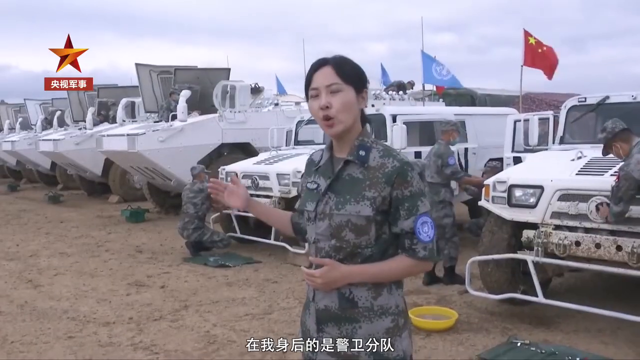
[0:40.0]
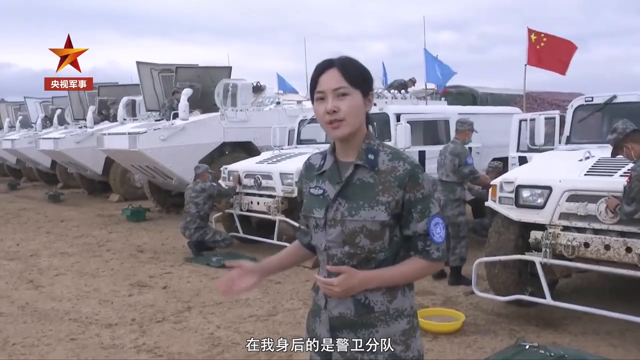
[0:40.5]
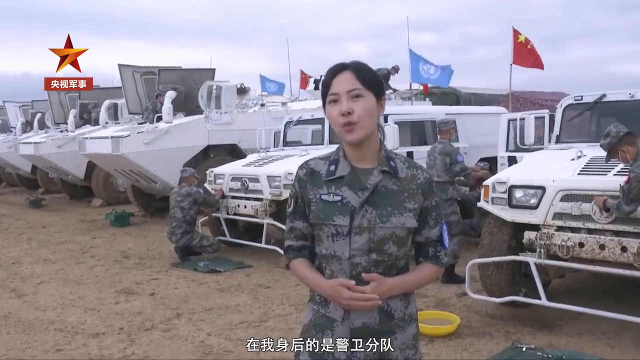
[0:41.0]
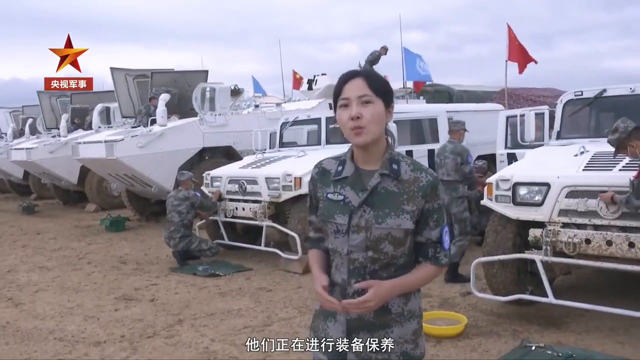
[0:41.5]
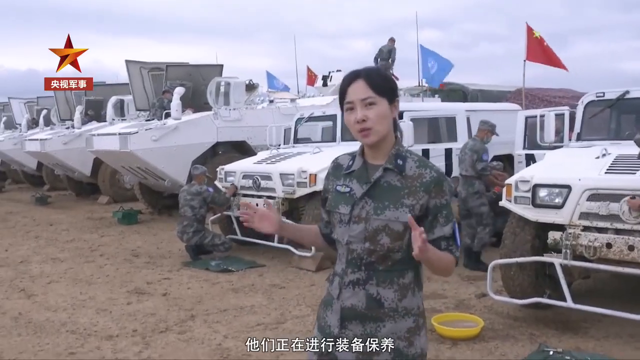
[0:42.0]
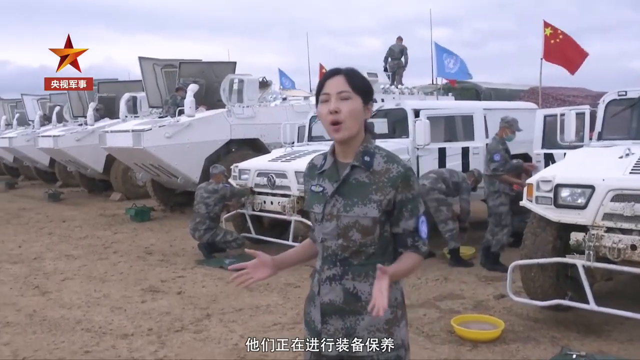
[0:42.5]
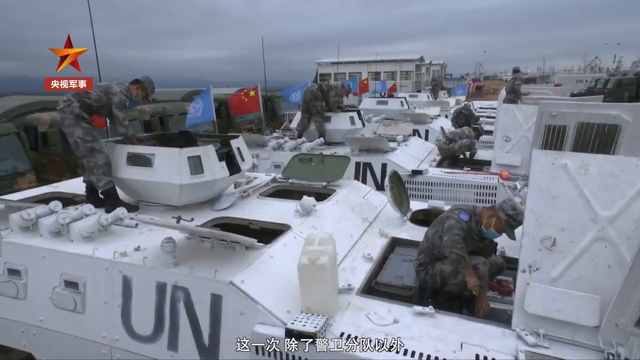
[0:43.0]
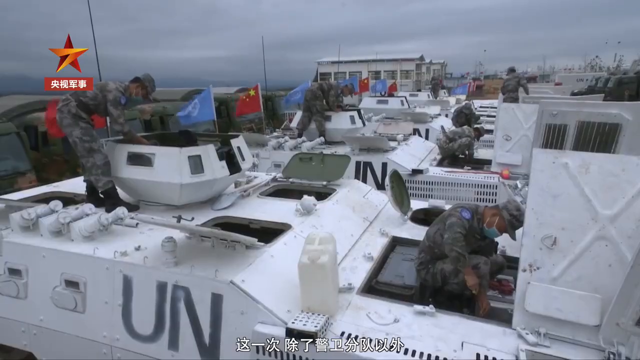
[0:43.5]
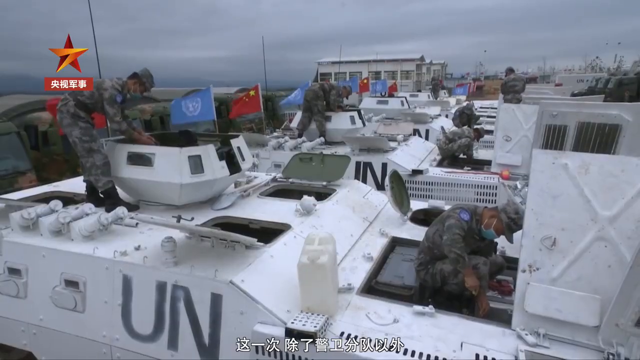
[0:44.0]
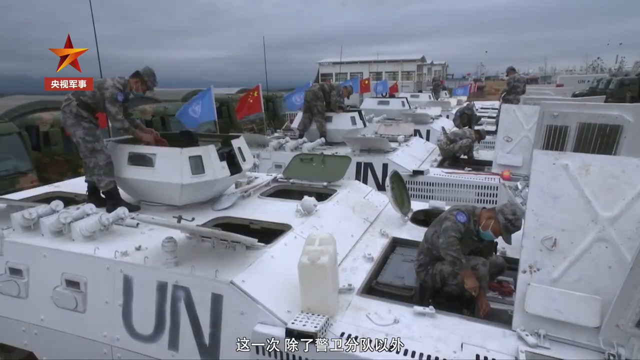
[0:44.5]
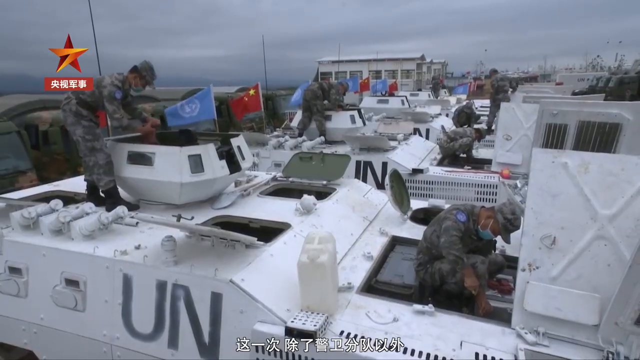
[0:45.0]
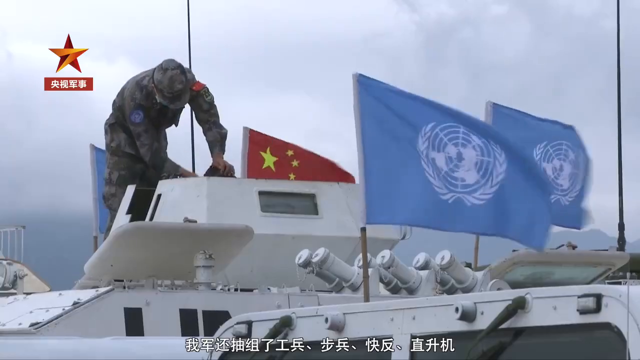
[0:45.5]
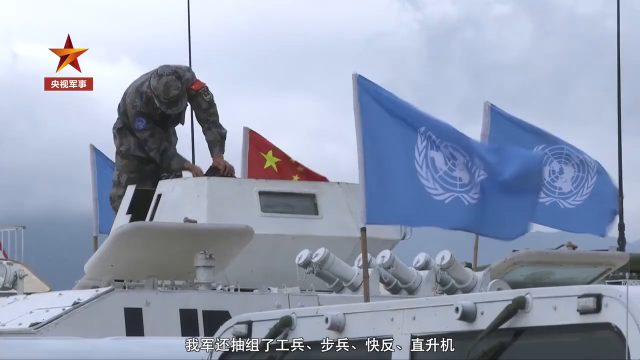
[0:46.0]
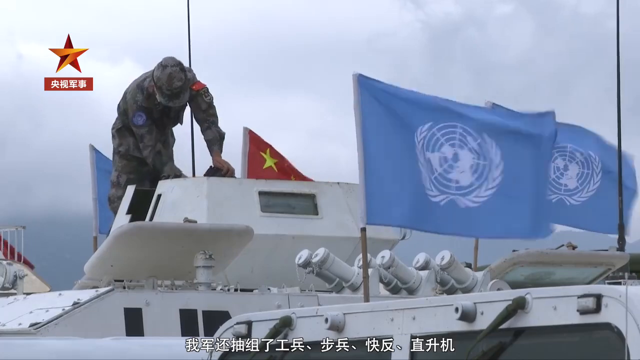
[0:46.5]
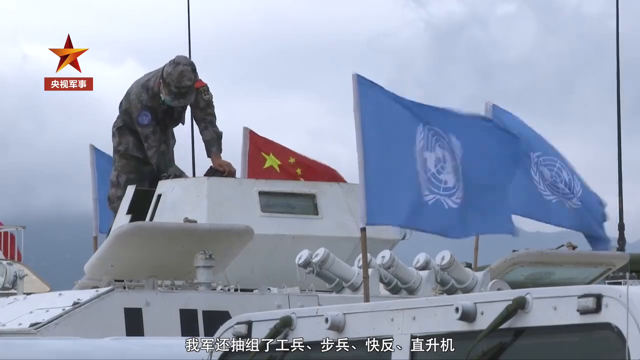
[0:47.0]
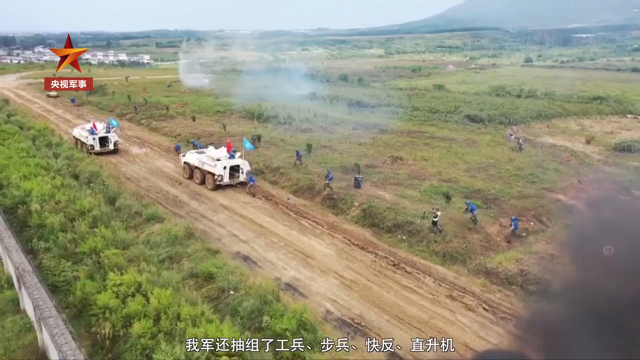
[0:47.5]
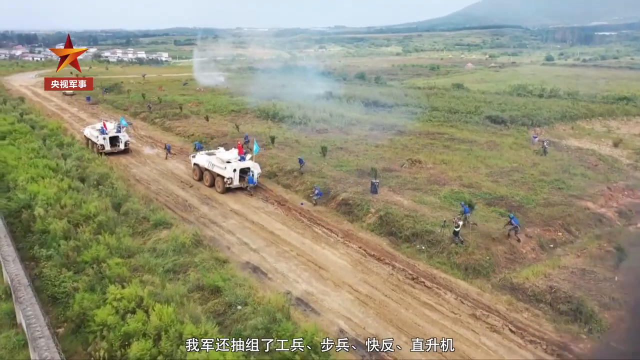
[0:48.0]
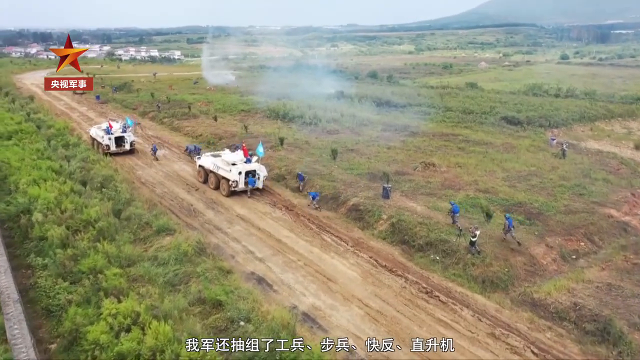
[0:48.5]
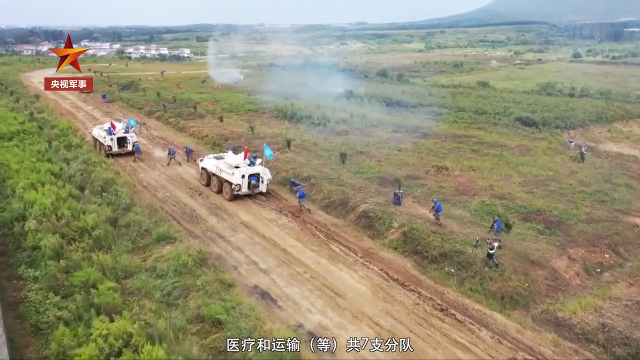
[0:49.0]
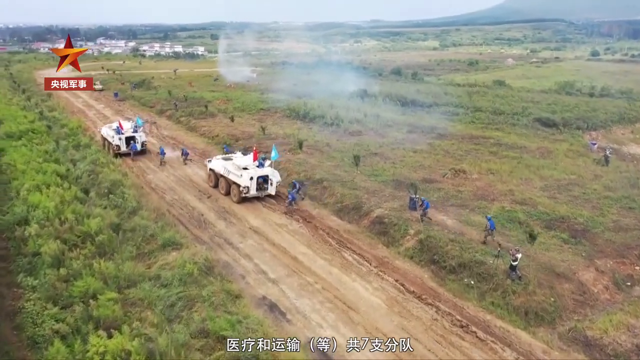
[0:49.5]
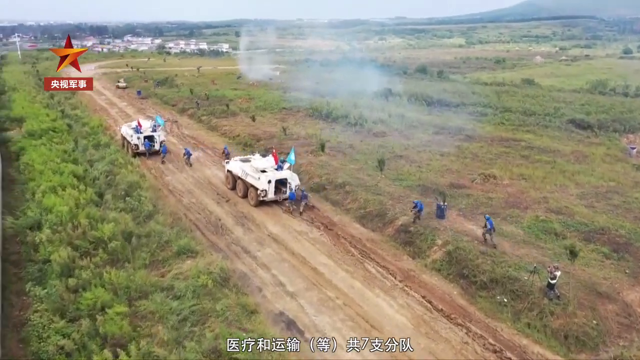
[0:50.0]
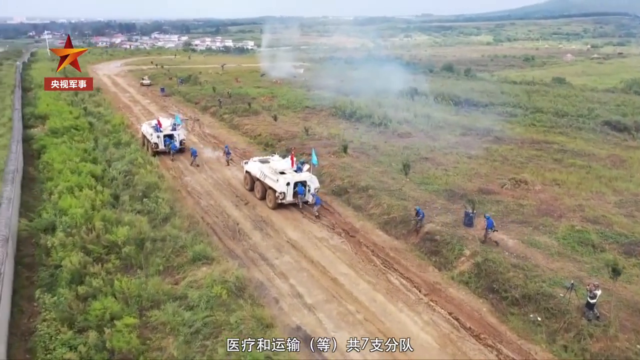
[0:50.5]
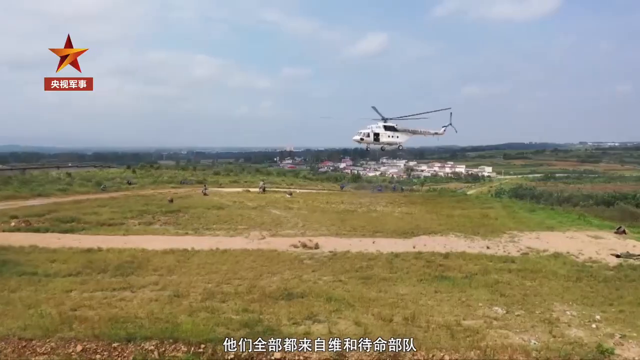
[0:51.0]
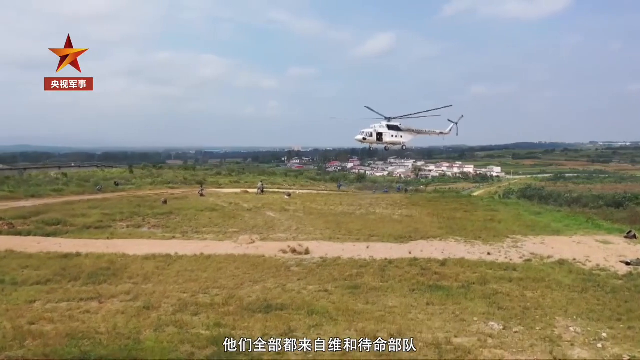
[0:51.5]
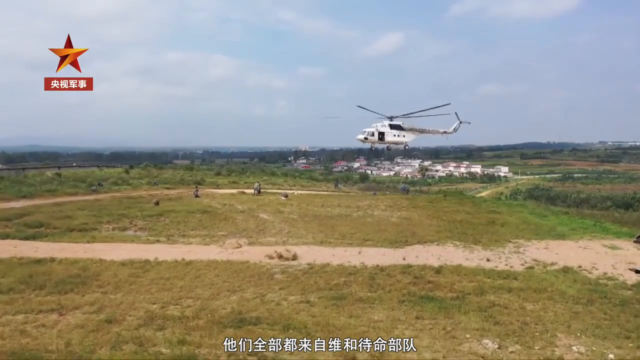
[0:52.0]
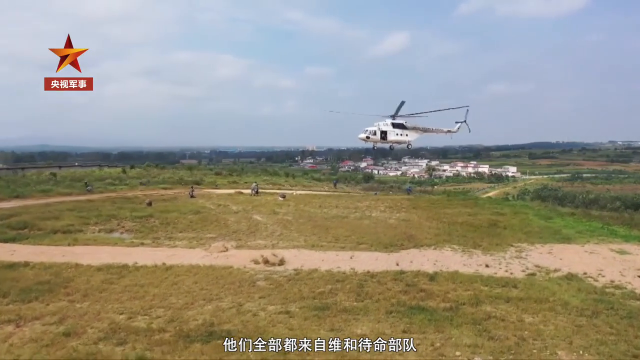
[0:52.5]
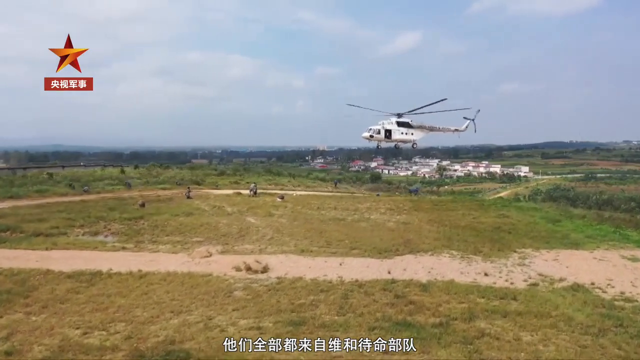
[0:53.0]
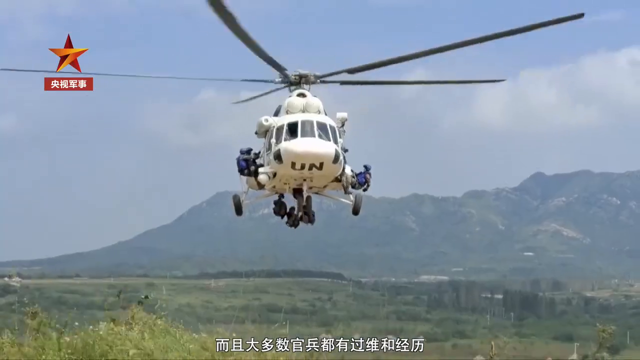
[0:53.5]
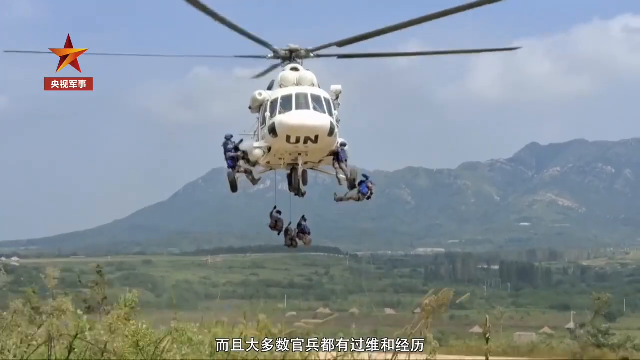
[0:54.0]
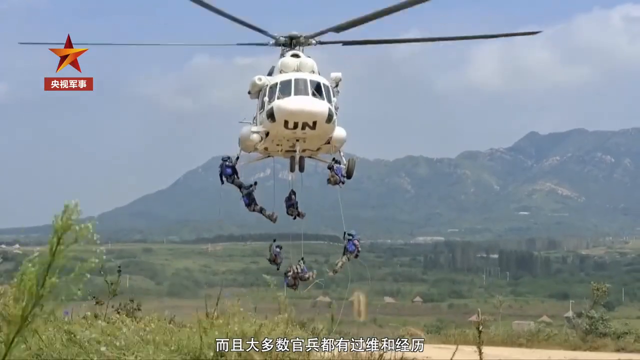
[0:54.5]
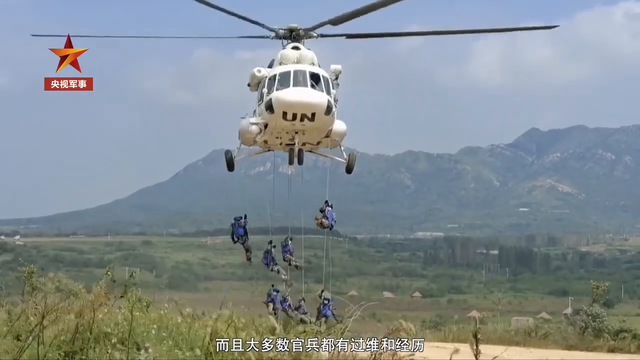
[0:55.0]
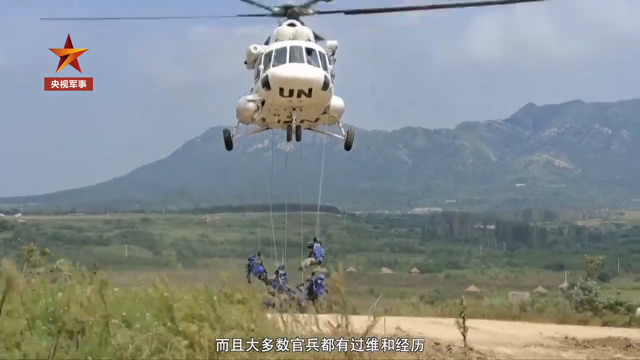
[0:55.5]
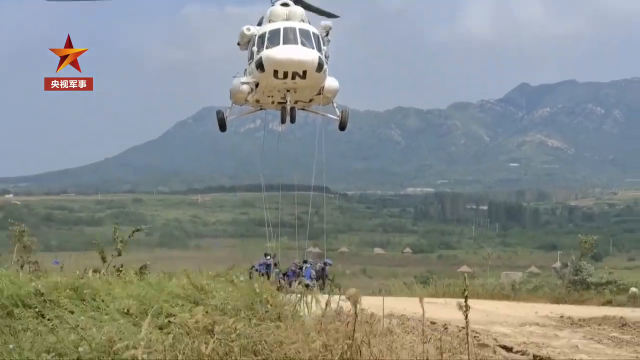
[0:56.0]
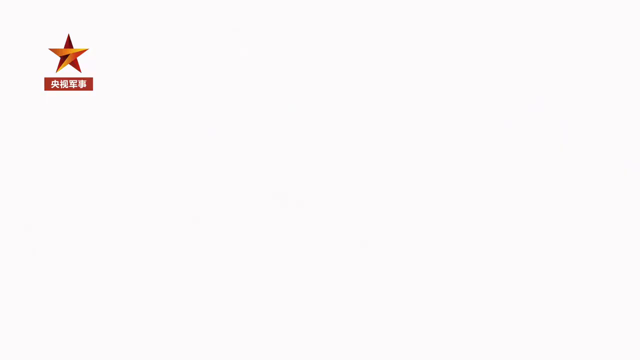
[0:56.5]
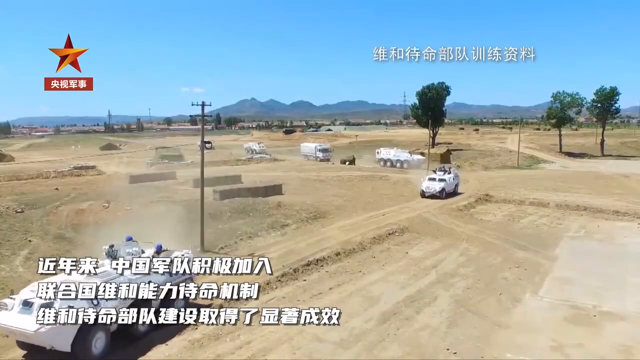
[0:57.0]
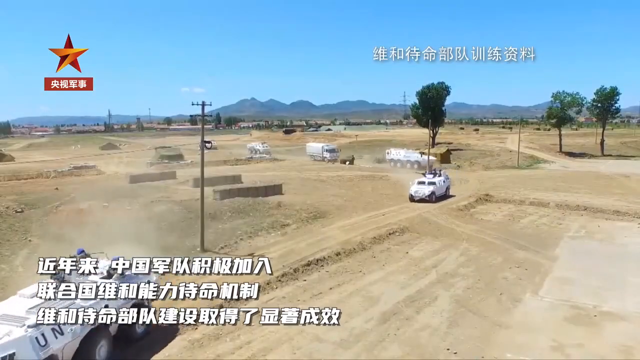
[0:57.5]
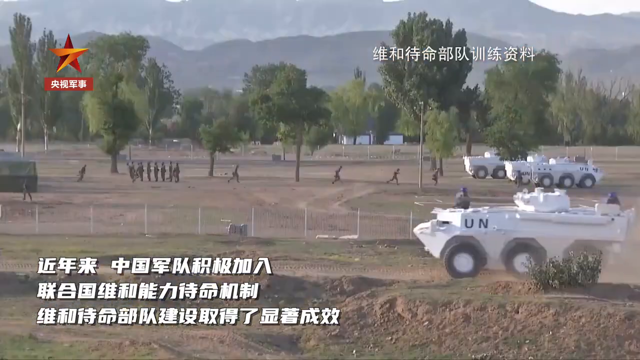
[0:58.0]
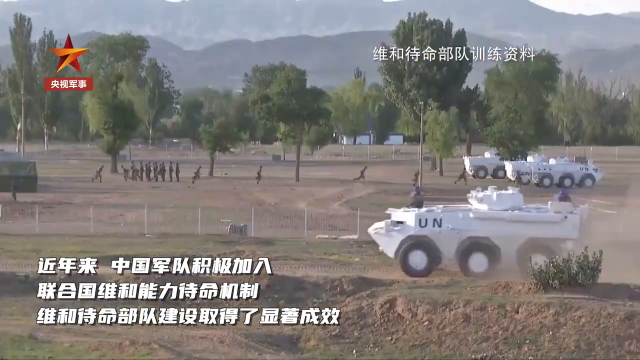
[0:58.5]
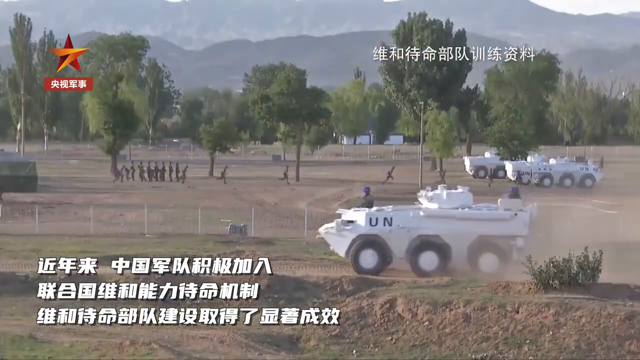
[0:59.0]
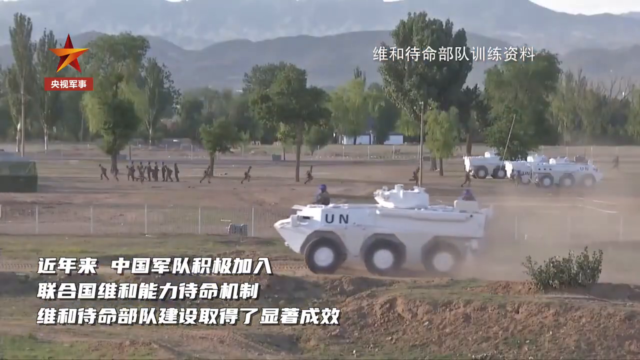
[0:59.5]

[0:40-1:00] A young woman in an army outfit stands in front of a line of military vehicles. Behind her are two sort of Hummer-type vehicles, and to their left are three tanks, all bright white. Behind the vehicles is a line of flags of different countries. The woman talks to the camera as she walks along, while a number of army personnel work on the vehicles, maybe cleaning them. The camera changes to a number of men working on top of the white tanks; it looks quite windy, with the flags flying and waving in the wind. An aerial view shows the white vehicles and various men in army outfits running toward them. The camera then looks out over grass stretching for miles, where a UN helicopter is about to land. As it hovers, about eight men abseil on ropes from the helicopter and land on a runway.